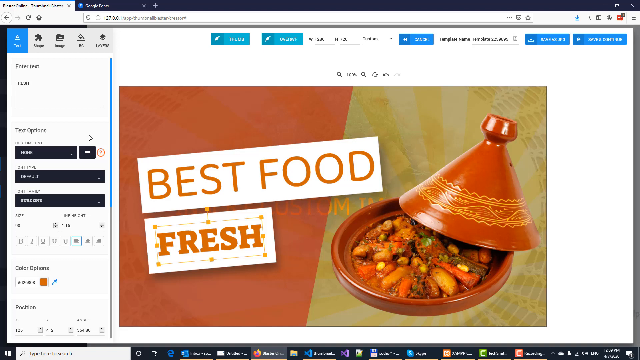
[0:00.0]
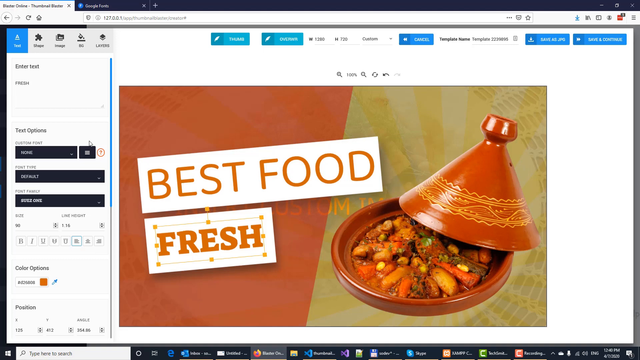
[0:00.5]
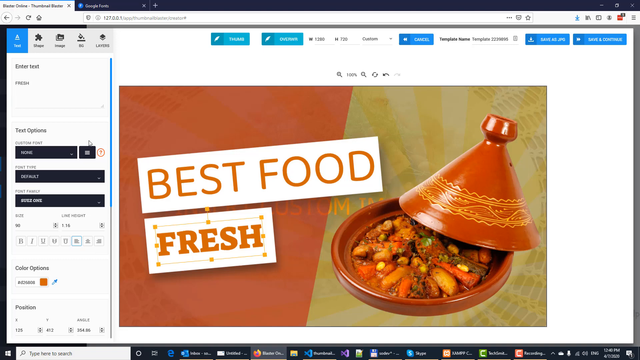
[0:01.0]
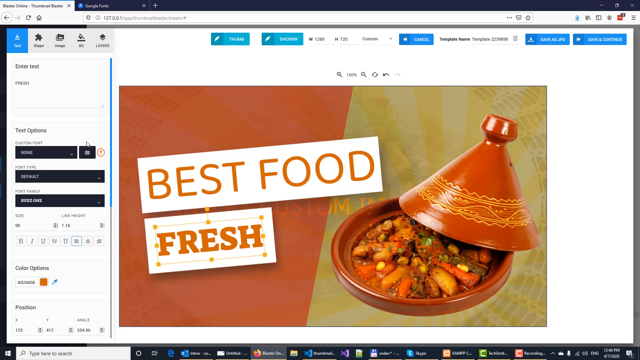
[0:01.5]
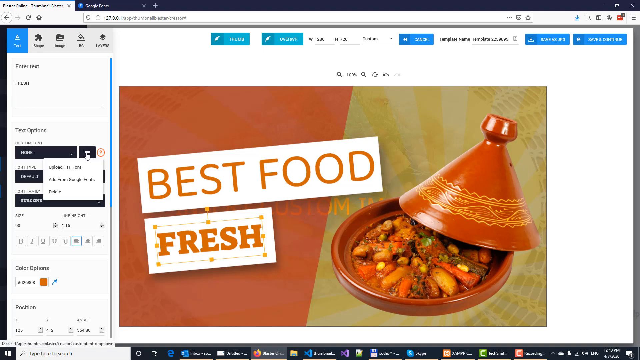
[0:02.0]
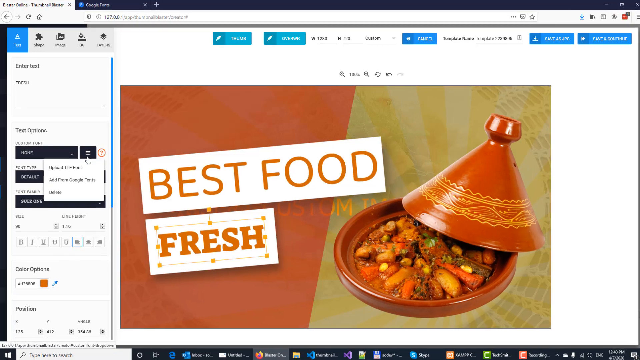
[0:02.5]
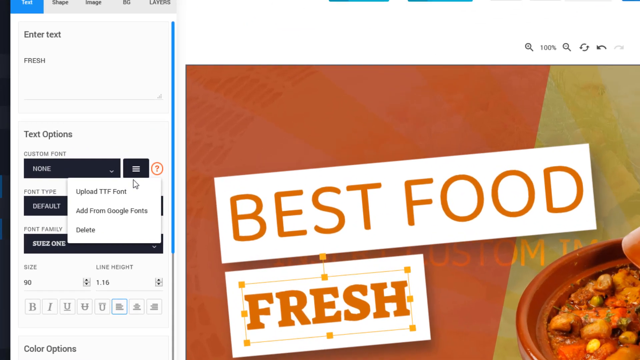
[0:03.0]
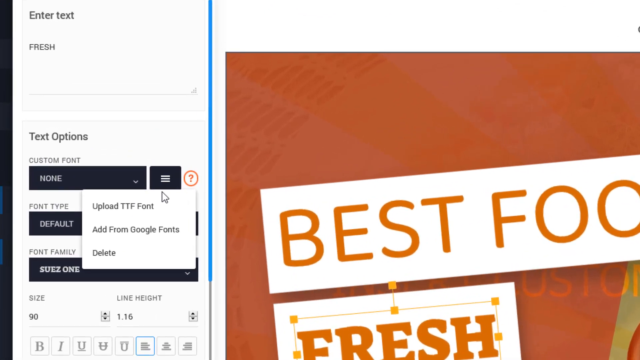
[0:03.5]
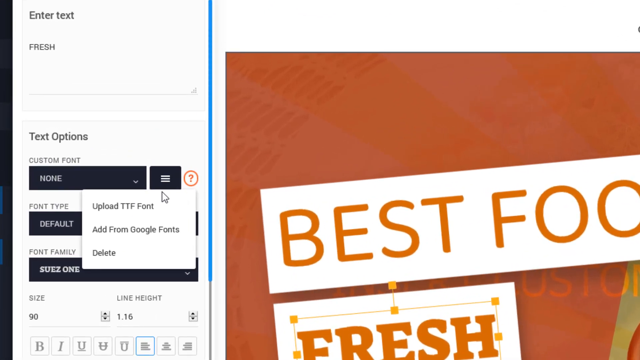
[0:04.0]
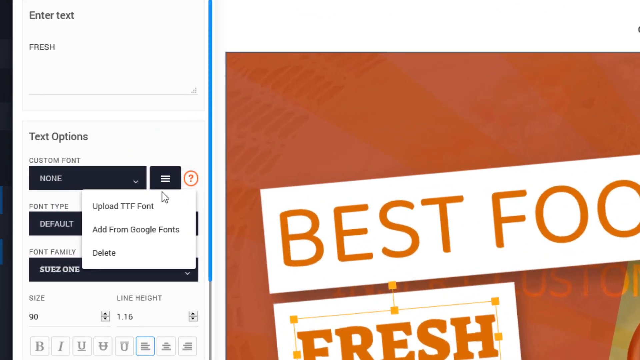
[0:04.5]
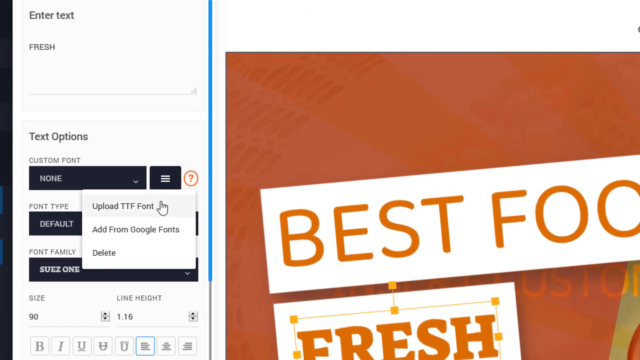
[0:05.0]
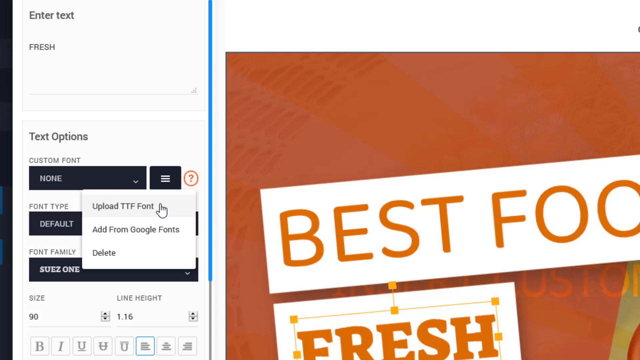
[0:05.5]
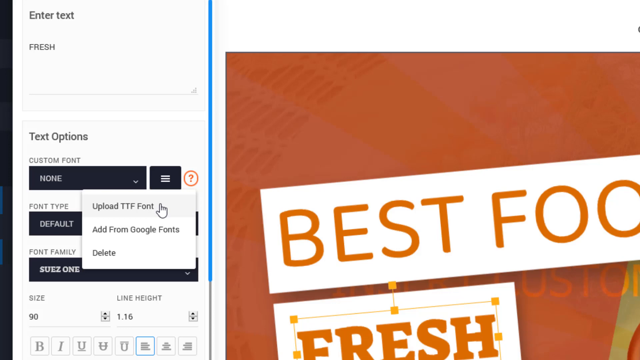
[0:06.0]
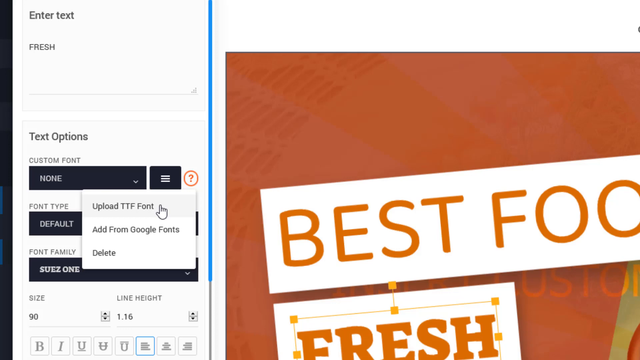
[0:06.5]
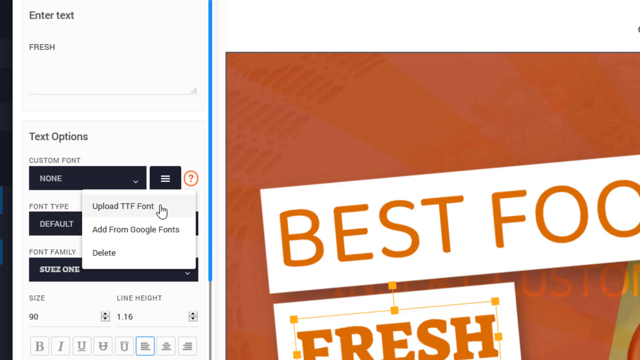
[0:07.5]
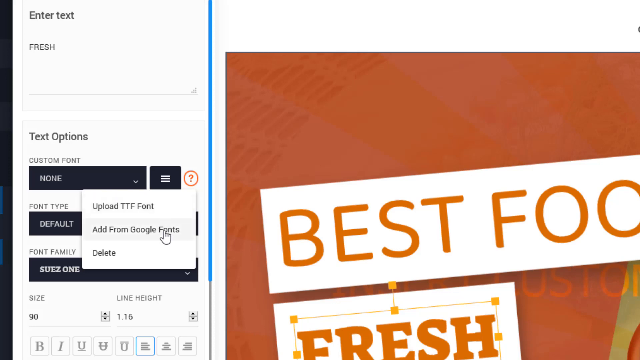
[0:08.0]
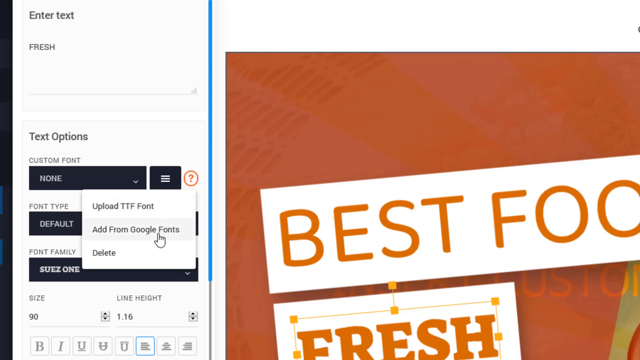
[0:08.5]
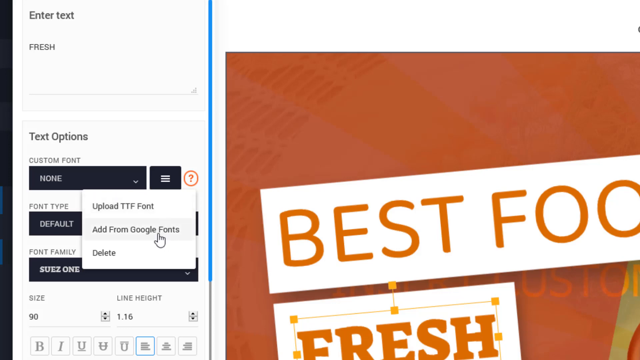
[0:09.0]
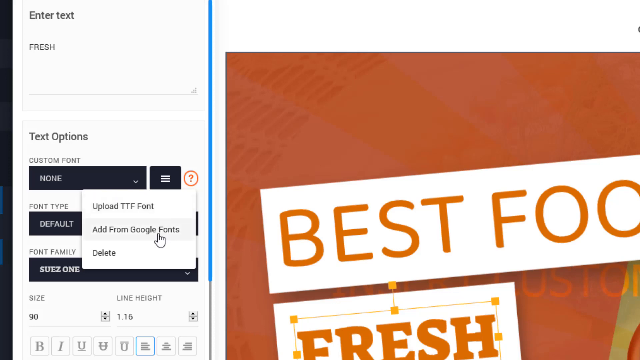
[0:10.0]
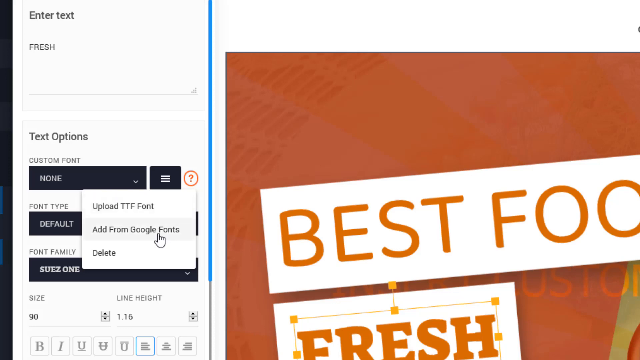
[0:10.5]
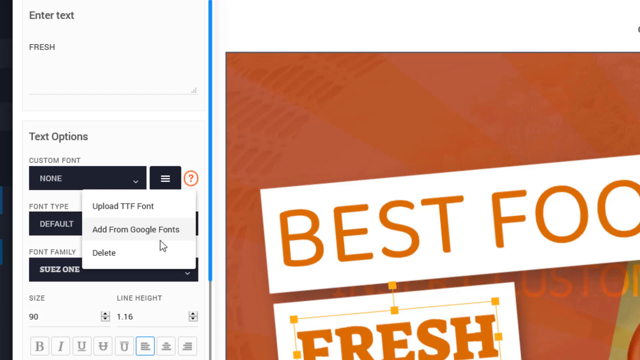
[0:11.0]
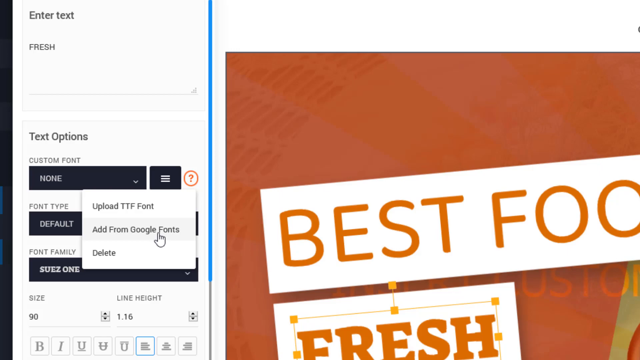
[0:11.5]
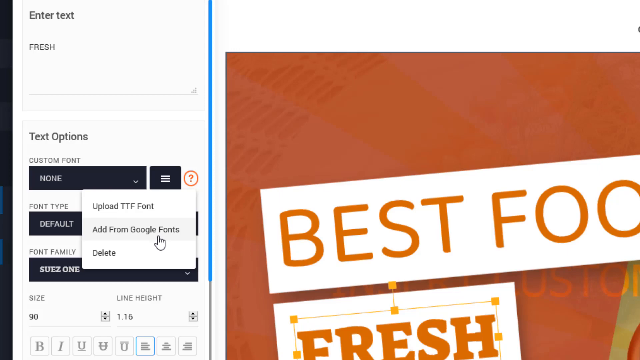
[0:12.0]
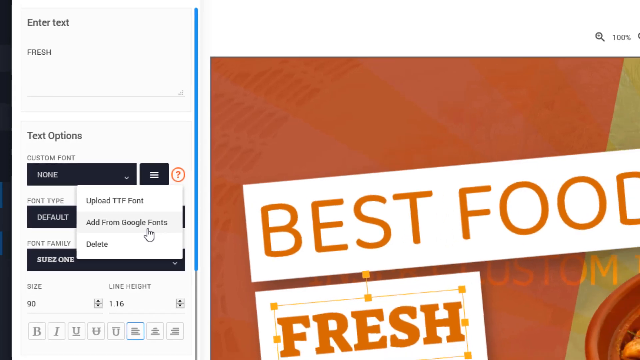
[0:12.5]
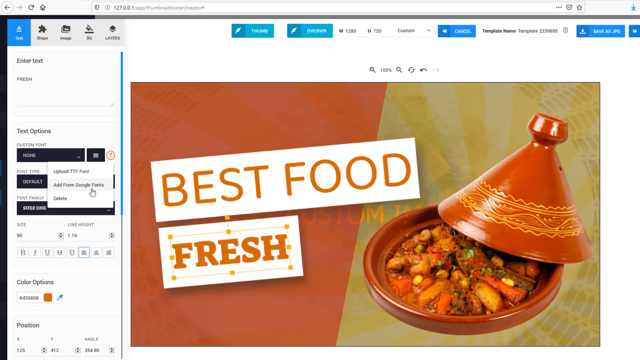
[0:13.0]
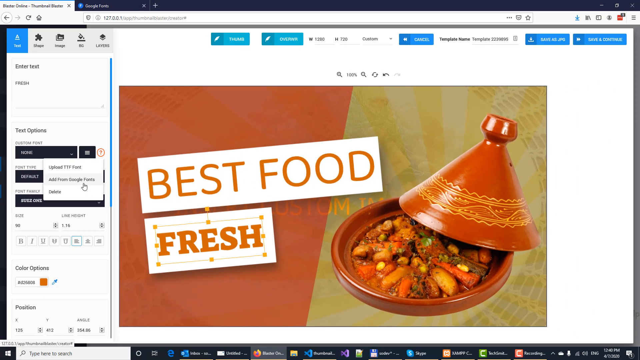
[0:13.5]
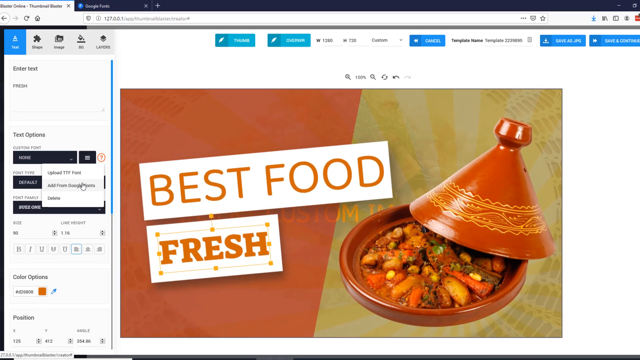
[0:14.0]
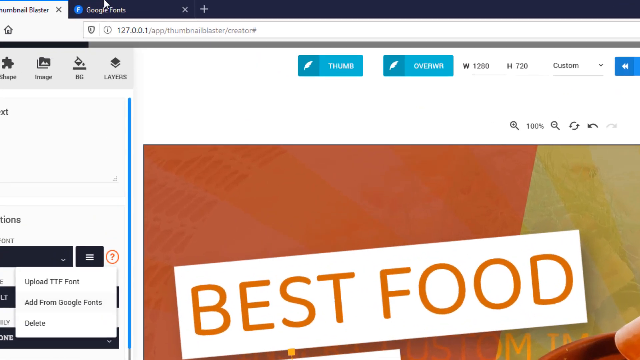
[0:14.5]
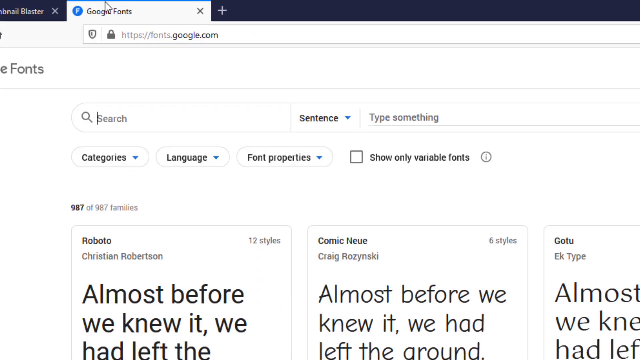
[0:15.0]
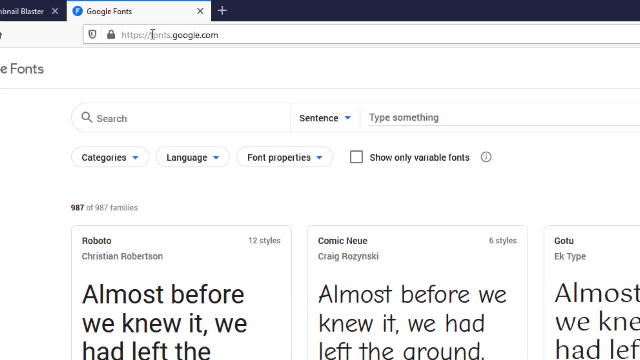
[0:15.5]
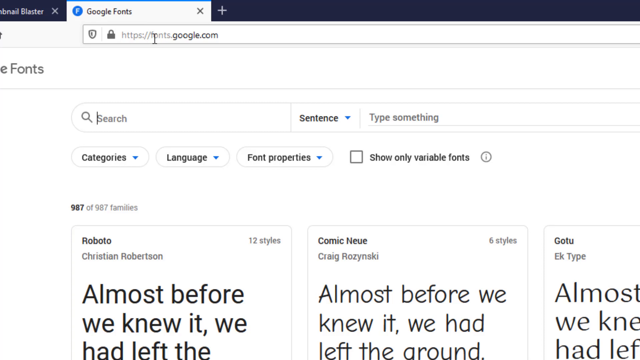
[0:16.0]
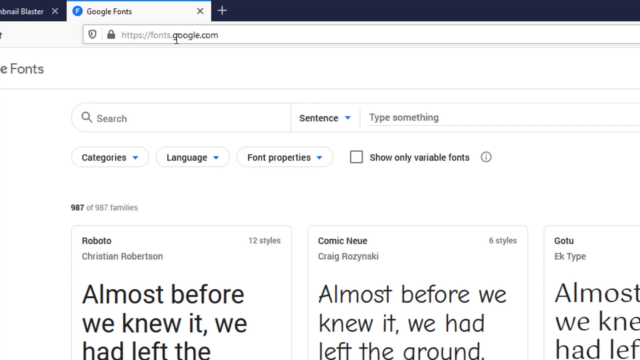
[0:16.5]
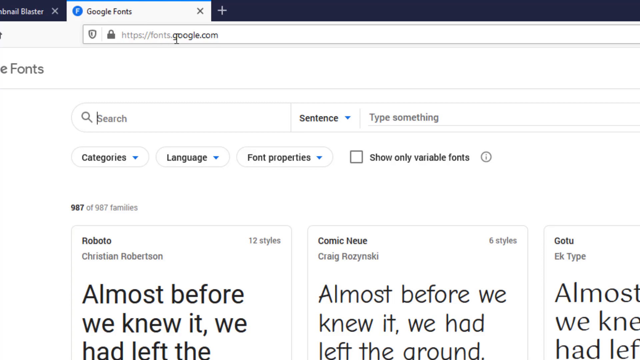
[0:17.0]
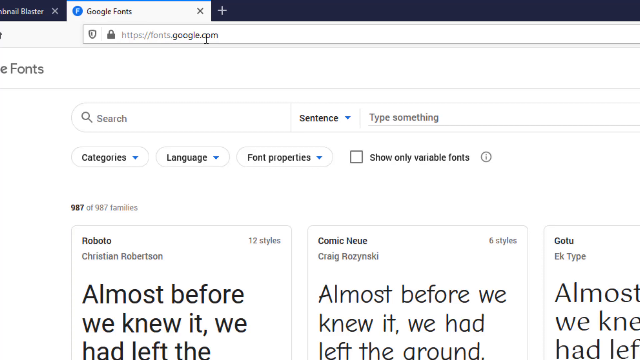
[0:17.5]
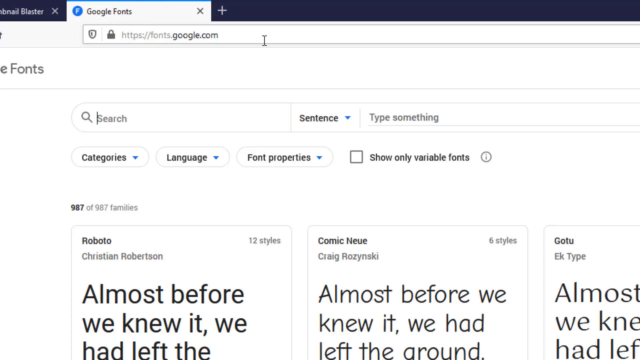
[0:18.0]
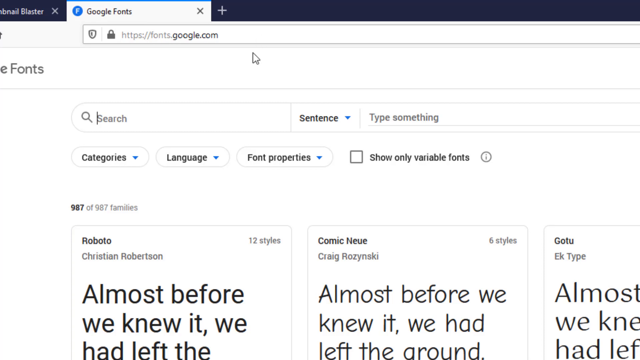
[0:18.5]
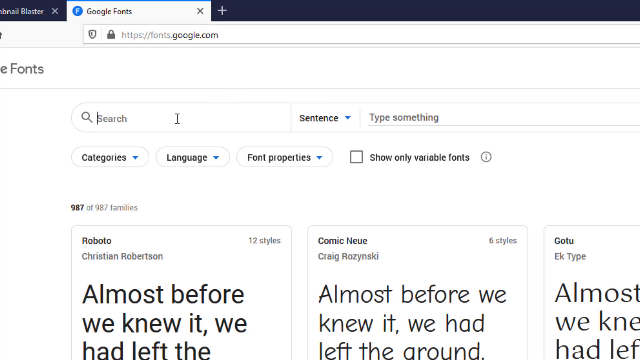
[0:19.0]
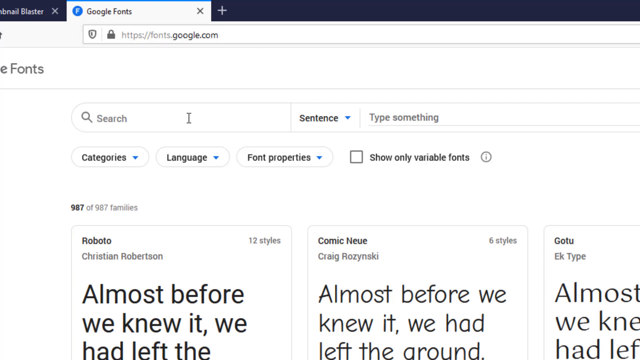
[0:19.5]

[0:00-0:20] A web browser displays a web page that looks to be an editing page for a presentation-style advertisement. The advertisement reads "best food fresh" in orange lettering and shows a fancy dish of food and vegetables inside a little bowl. The view zooms in on the left side of the page, which shows enter-text and text options, including the font type and font family. The mouse cursor goes over and clicks the options to upload a GTF font and to add from Google Fonts. The view zooms out and then zooms back in as the browser goes to the next tab, Google Fonts at fonts.google.com, where the page shows categories, language, and font properties.